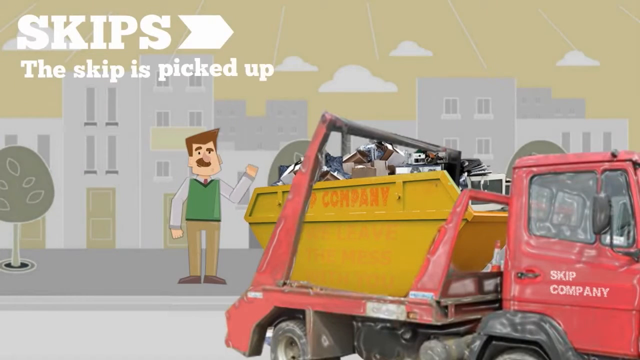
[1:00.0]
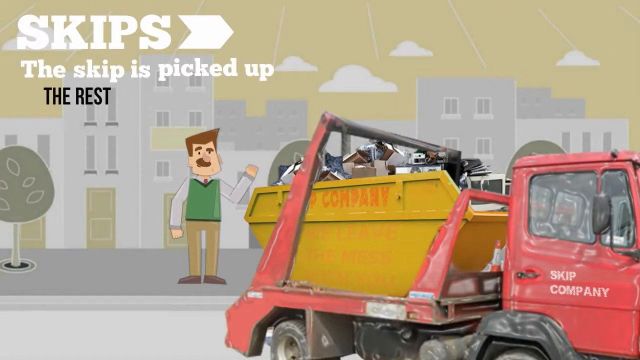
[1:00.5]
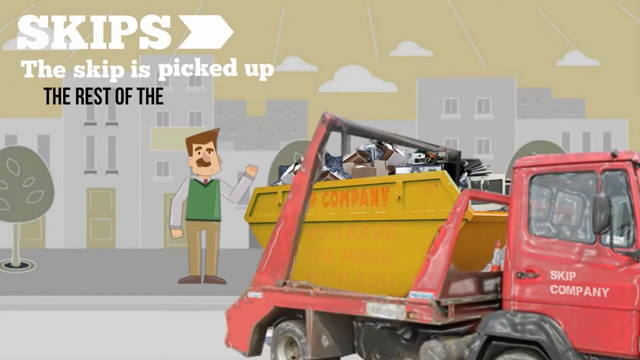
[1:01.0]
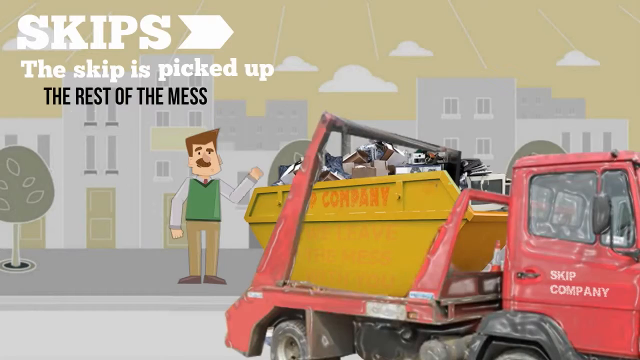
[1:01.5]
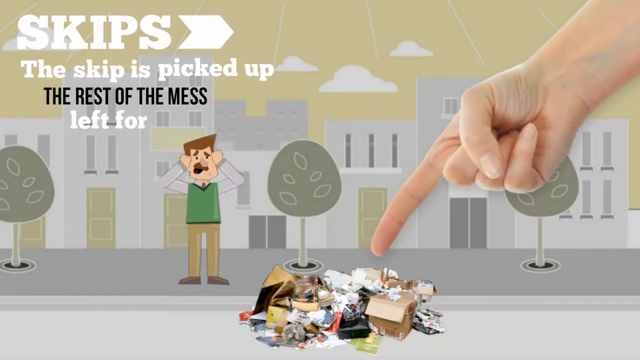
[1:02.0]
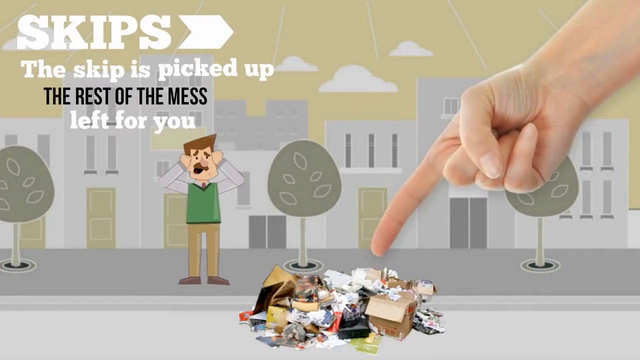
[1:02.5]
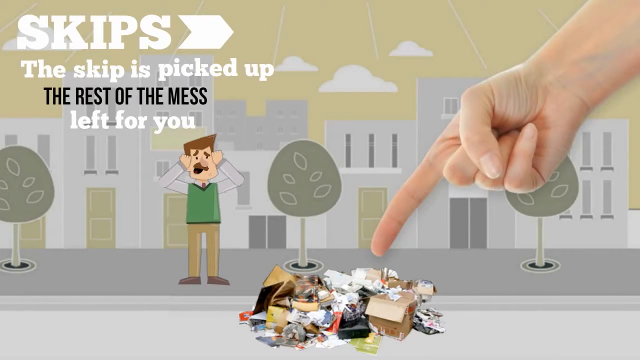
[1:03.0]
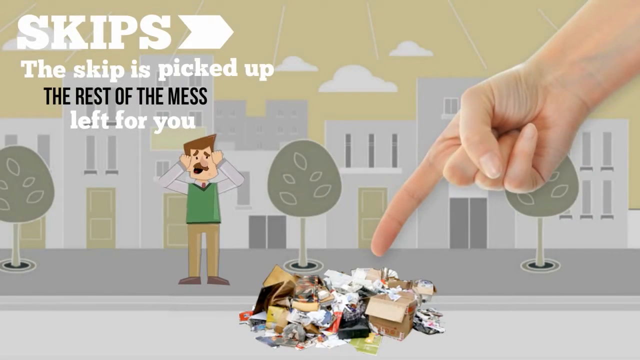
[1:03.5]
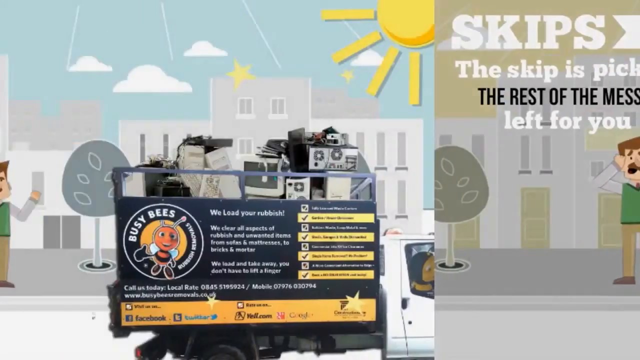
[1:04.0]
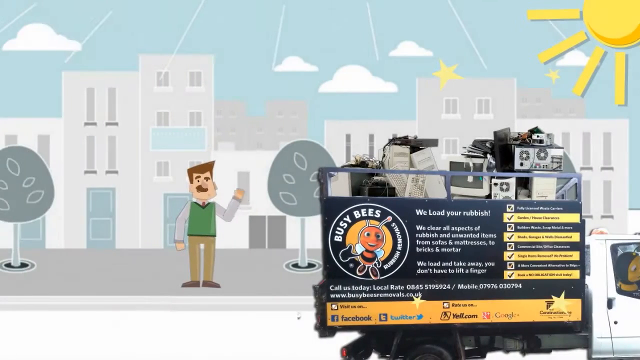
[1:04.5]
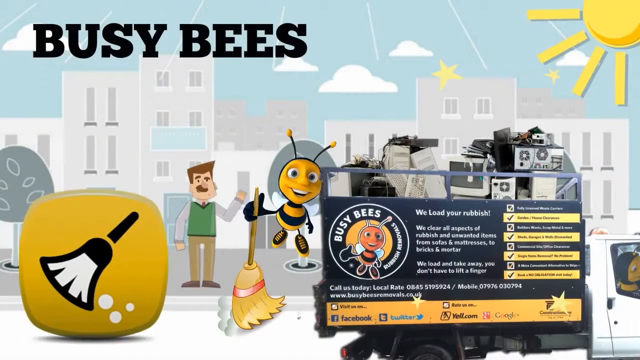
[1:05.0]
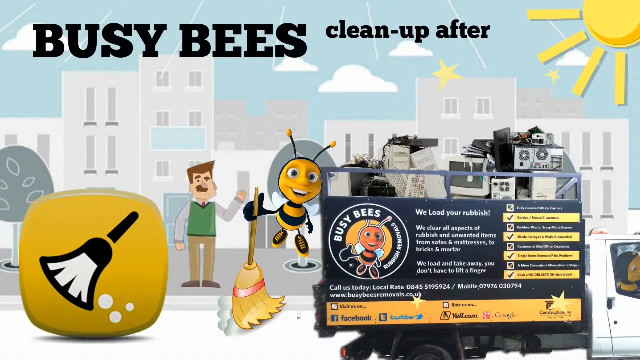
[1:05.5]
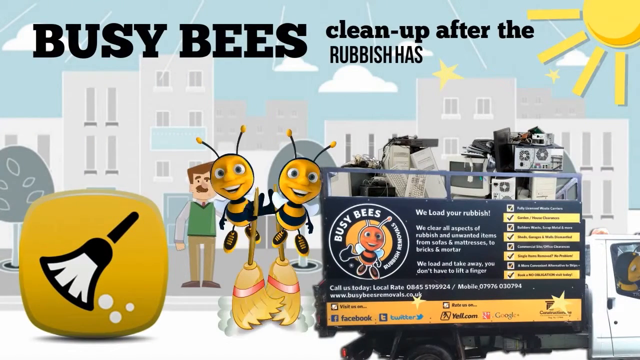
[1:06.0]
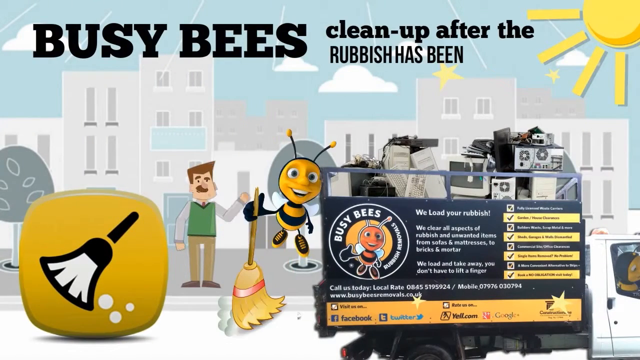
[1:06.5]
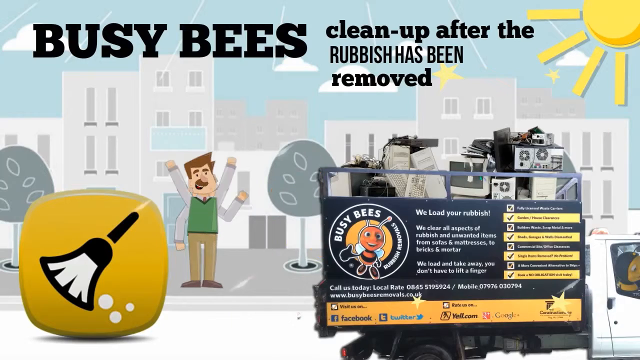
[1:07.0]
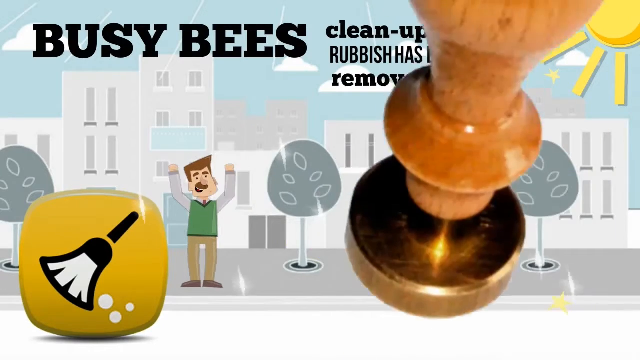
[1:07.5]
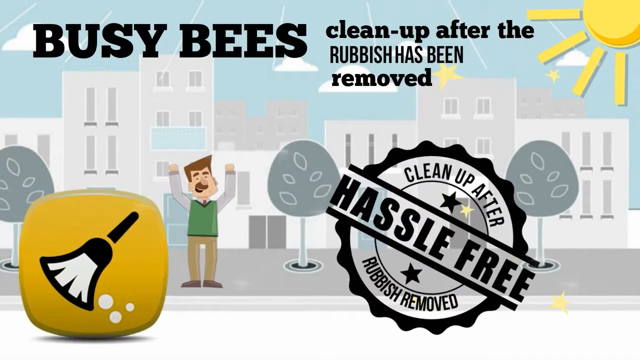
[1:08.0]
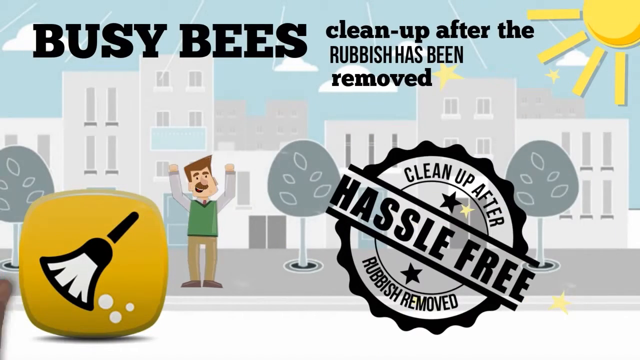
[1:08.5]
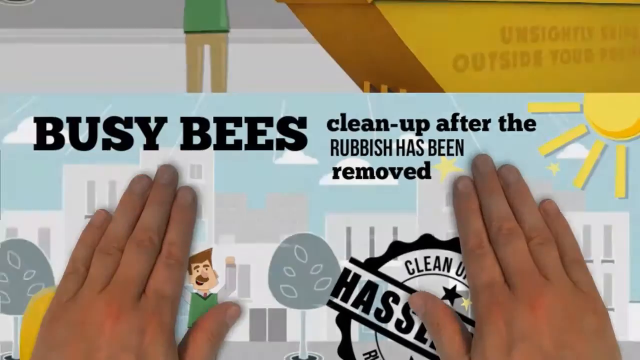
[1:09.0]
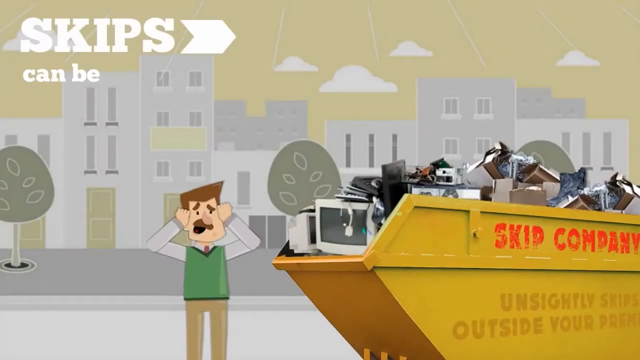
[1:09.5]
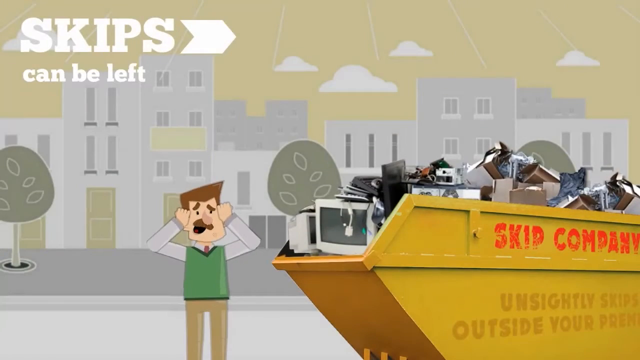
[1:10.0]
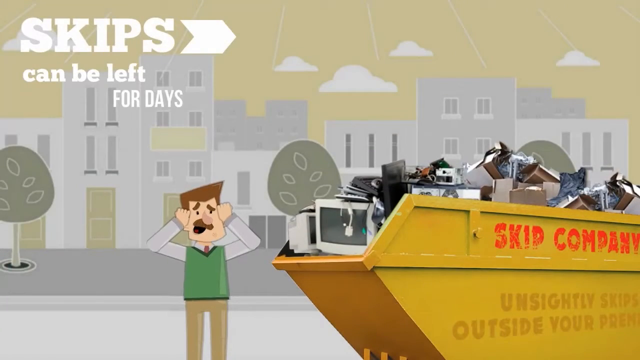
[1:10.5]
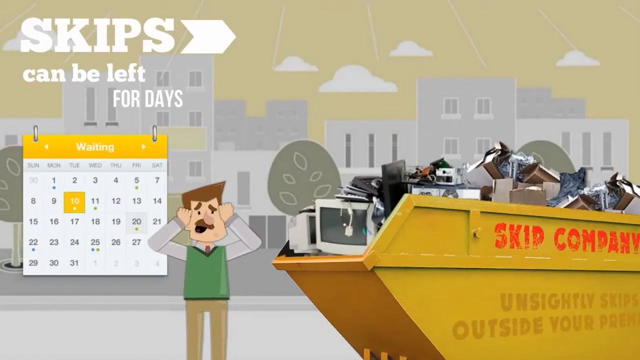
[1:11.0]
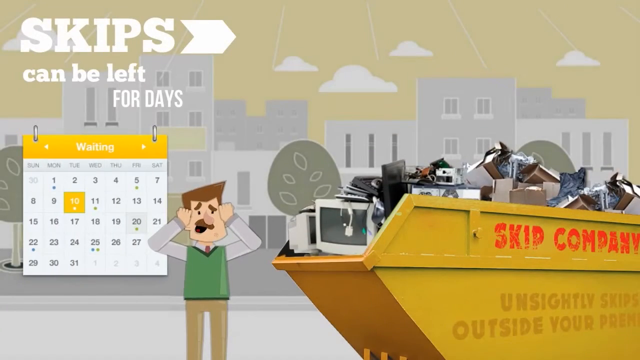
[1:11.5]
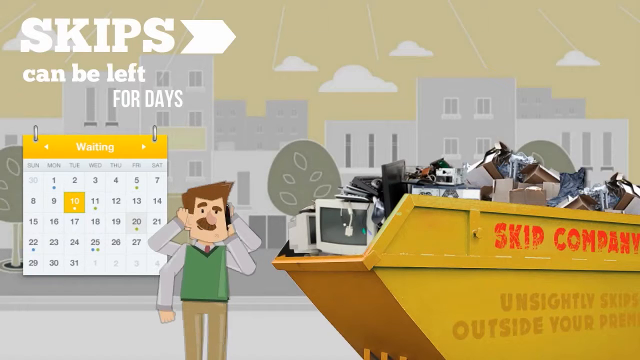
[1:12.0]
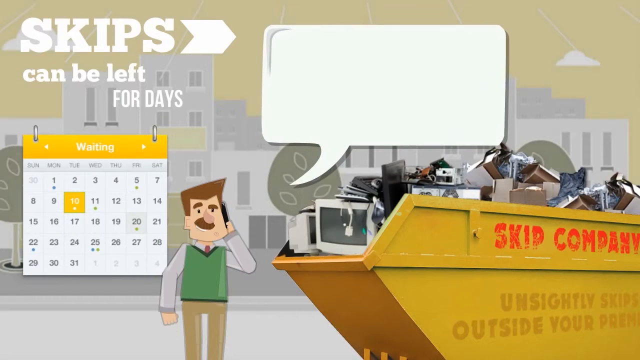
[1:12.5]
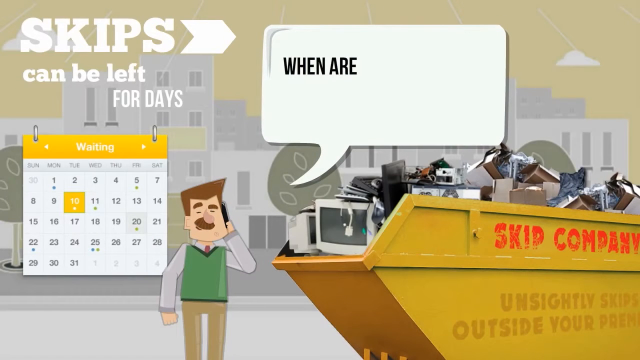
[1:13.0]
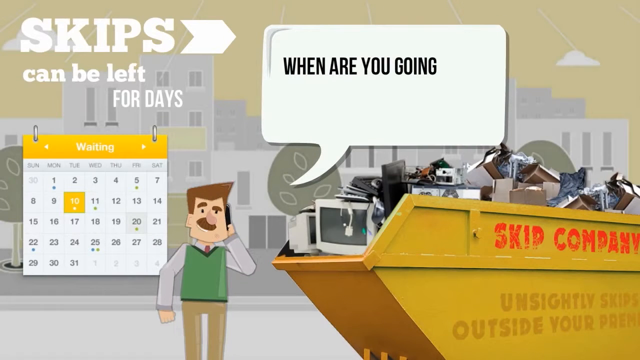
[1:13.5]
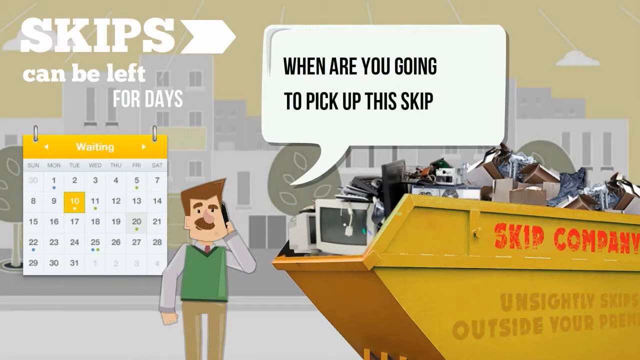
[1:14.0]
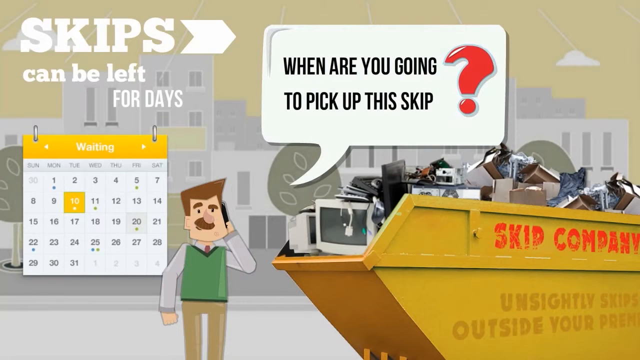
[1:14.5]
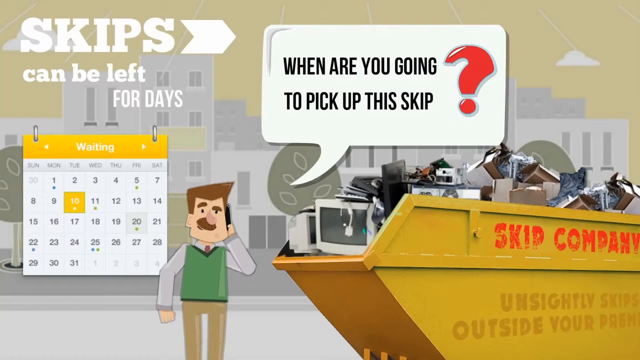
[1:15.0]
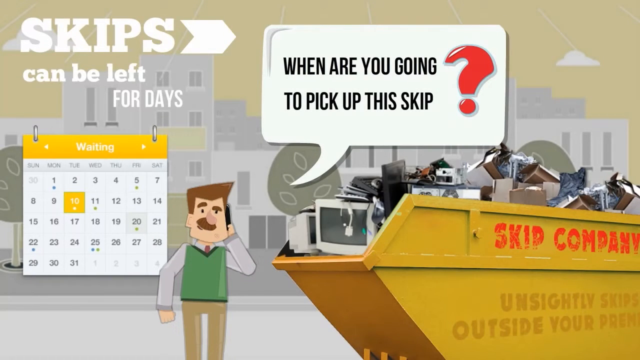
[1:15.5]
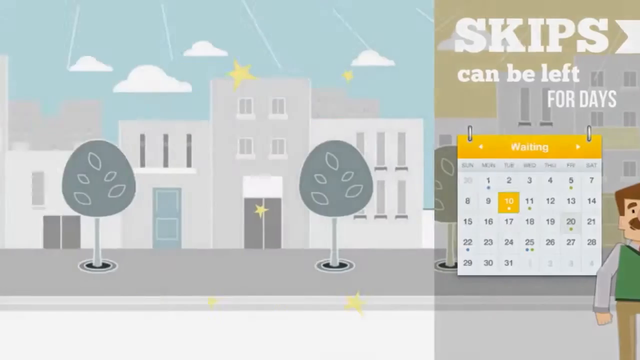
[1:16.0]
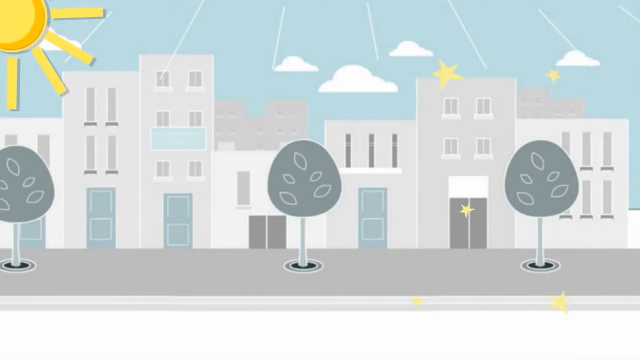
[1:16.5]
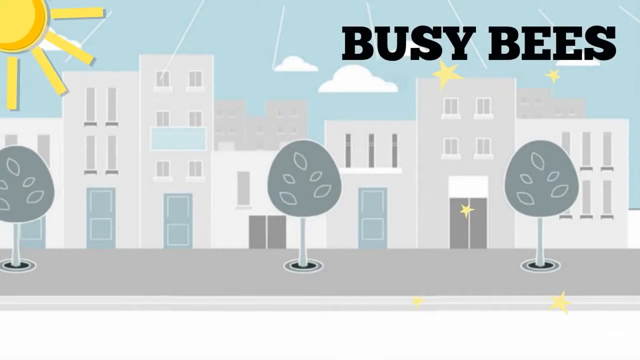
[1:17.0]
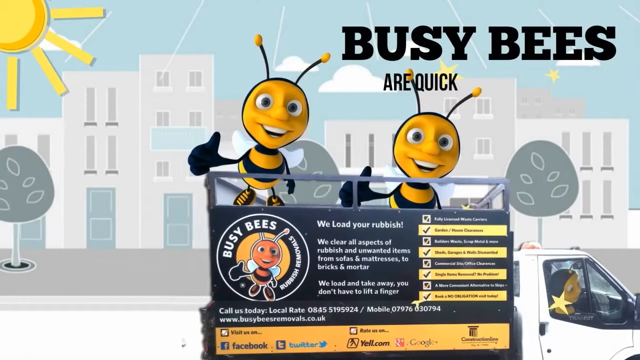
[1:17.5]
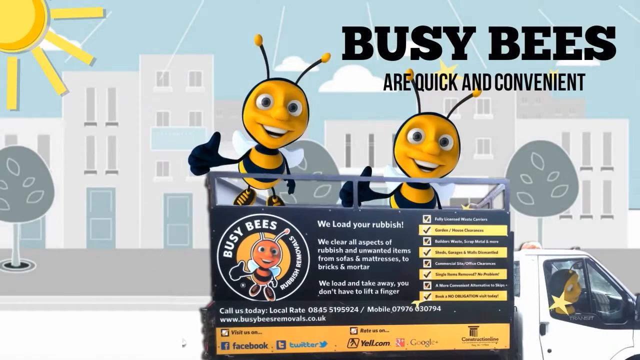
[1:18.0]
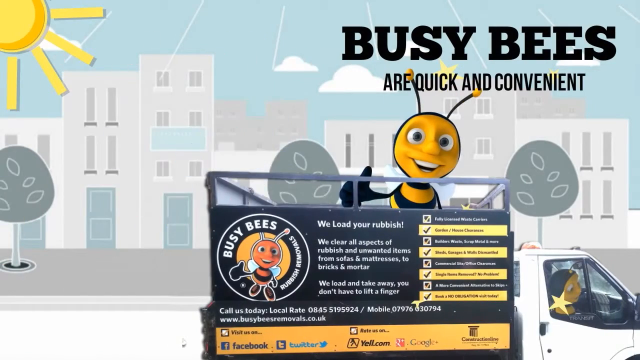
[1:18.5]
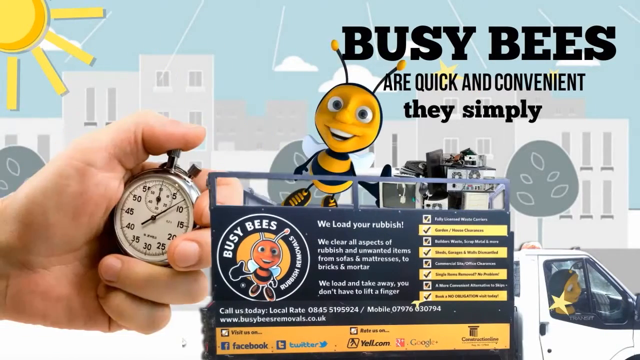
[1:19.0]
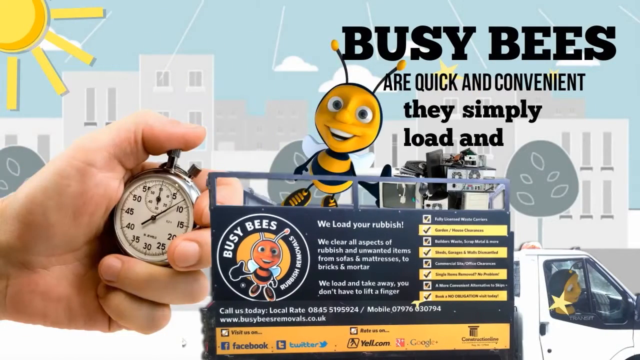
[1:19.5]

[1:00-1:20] On the right is a red garbage truck labeled "Skip Company," and the cartoon character is on the left. The truck carries the large yellow tin trash container labeled "Skip Company," which holds a lot of waste. A title in the top left corner reads "Skips. The skip is picked up. The rest of the mess left for you." The cartoon man in the green vest is on the left and looks very worried. A pile of trash is on the ground in the center, and a hand in the upper right area points toward it. The scene changes to the Busy Bees work truck: a couple of bees come and clean the road, and then the truck takes off. A stamp appears on the right reading "clean up after, rubbish removed, hassle free," and the cartoon character on the left is happy, with hands and arms up in the air. Then text in the top left corner says "skips can be left for days," and the cartoon character looks worried while making a phone call. A message bubble in the top center reads "when are you going to pick up this skip?" In the next scene, text in the top right corner reads "Busy Bees are quick and convenient. They simply load and go," and a left hand appears from the left side holding a silver pocket stopwatch.